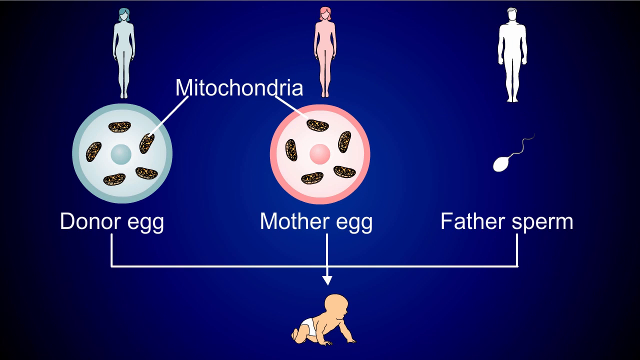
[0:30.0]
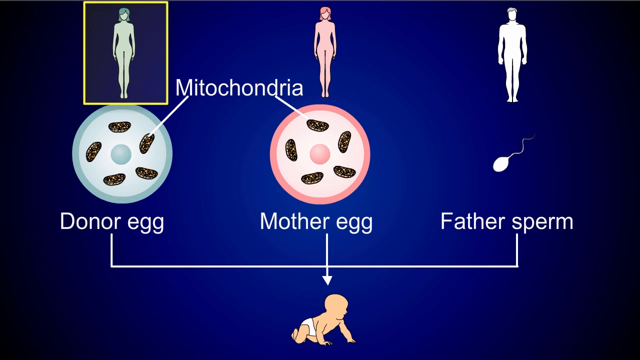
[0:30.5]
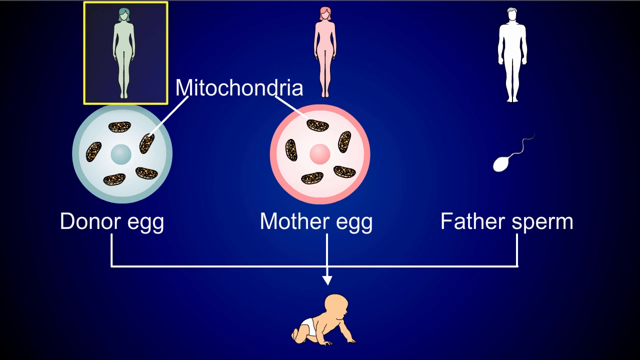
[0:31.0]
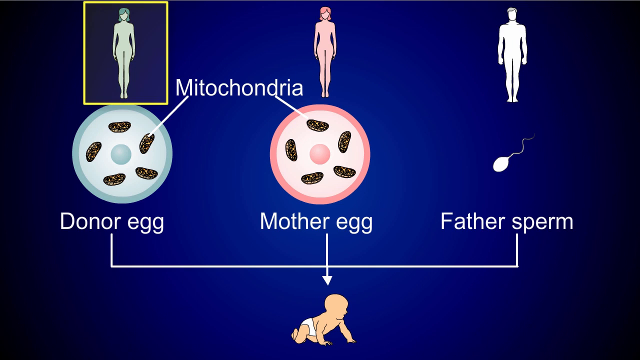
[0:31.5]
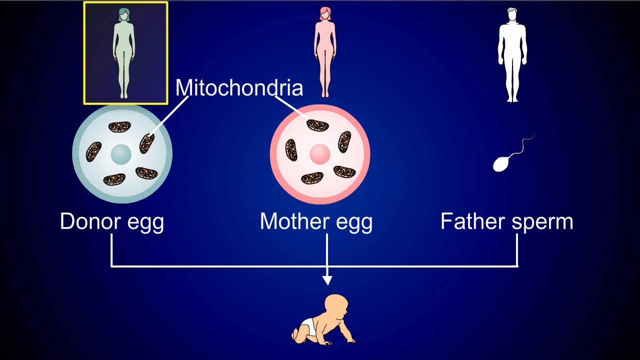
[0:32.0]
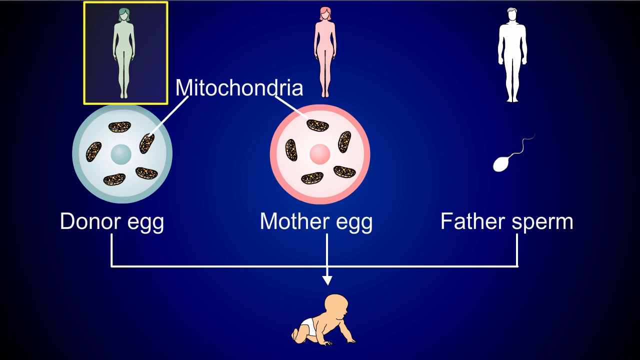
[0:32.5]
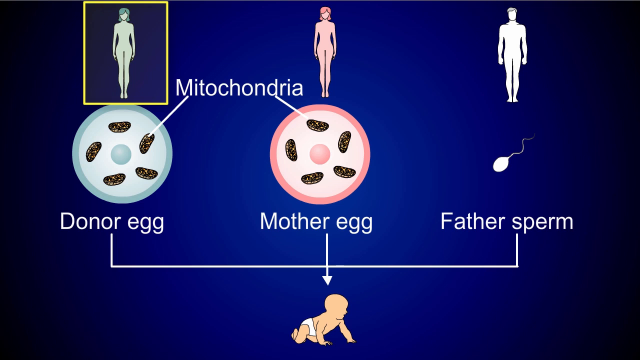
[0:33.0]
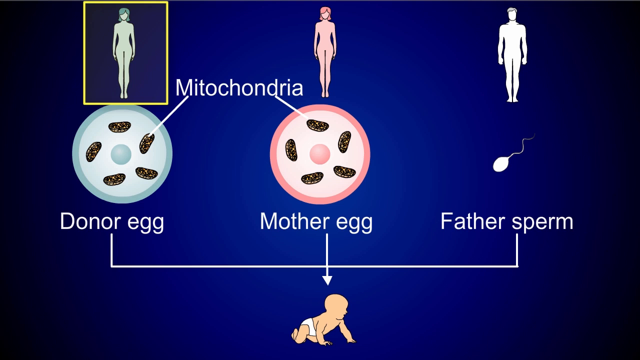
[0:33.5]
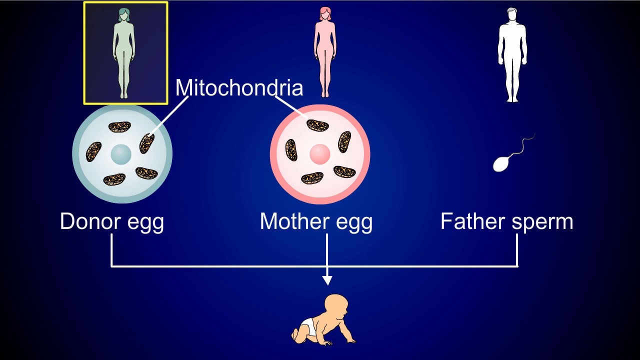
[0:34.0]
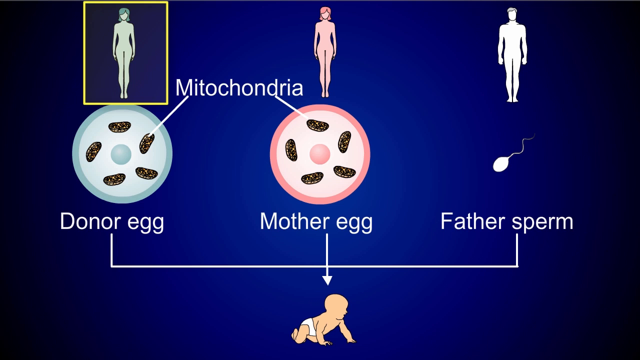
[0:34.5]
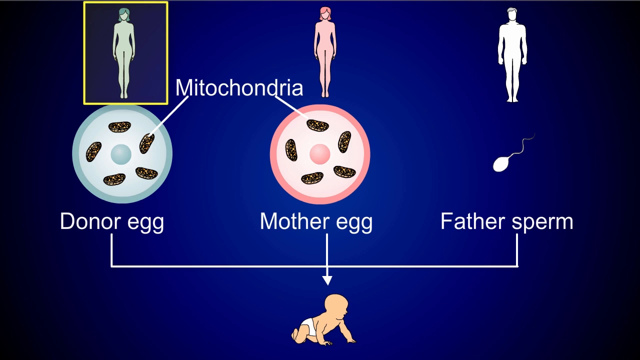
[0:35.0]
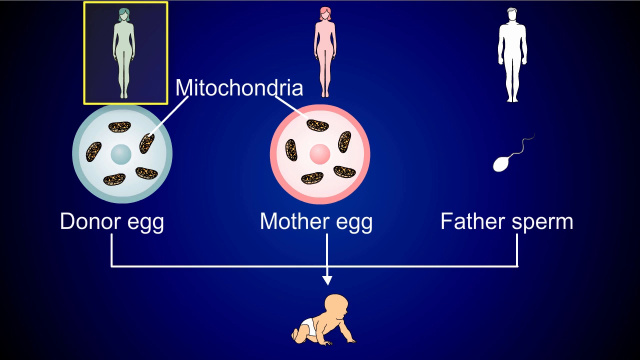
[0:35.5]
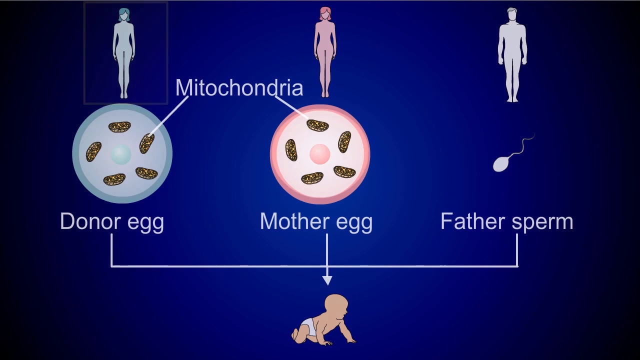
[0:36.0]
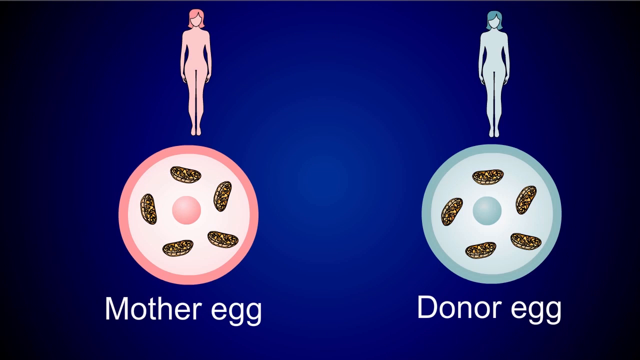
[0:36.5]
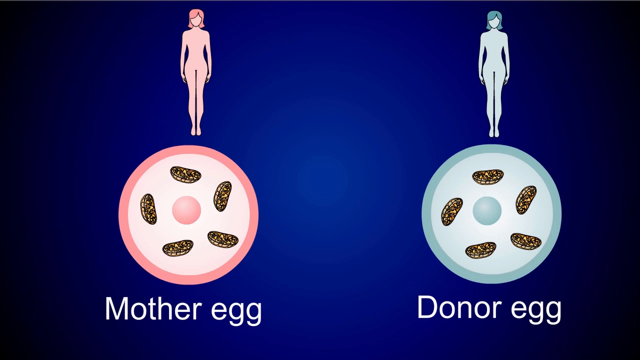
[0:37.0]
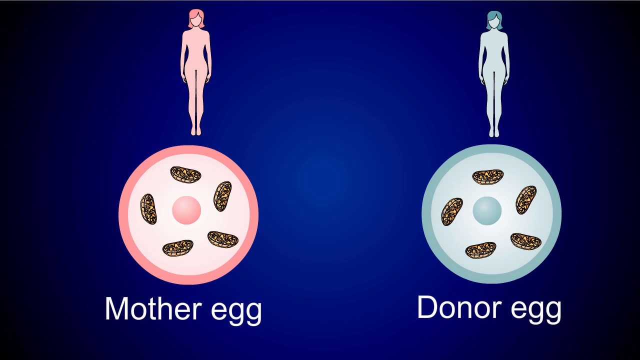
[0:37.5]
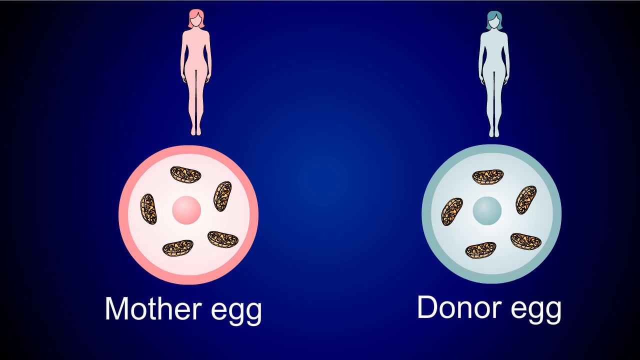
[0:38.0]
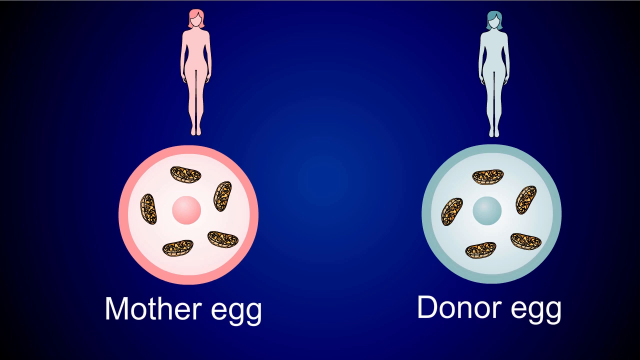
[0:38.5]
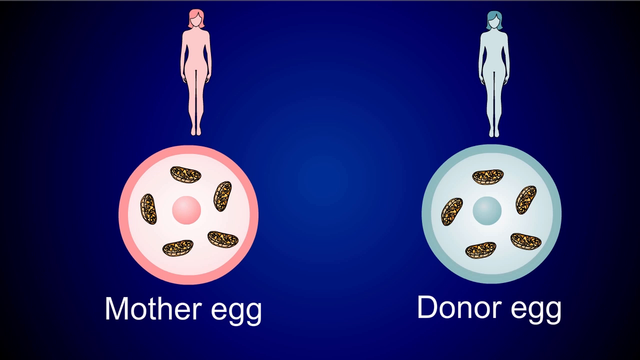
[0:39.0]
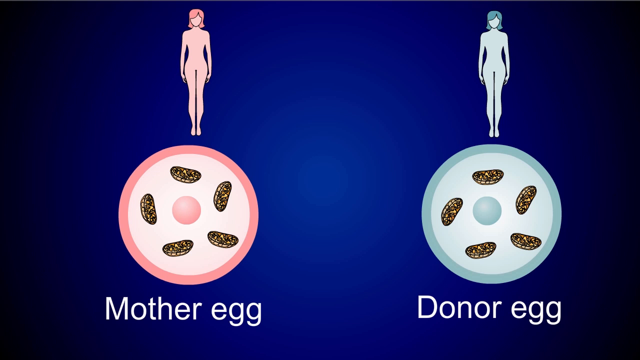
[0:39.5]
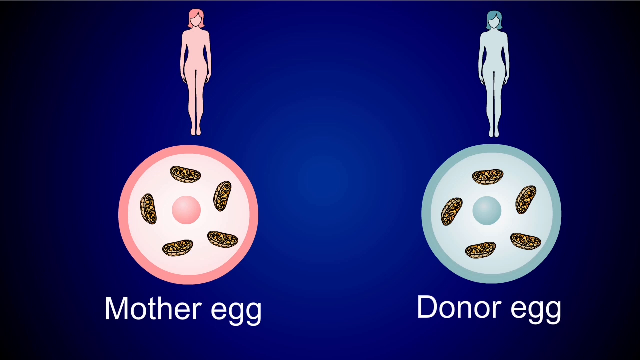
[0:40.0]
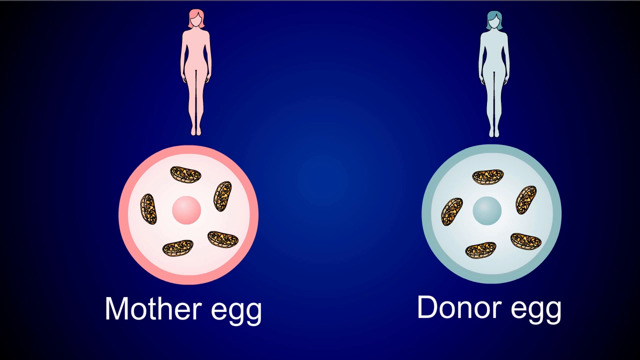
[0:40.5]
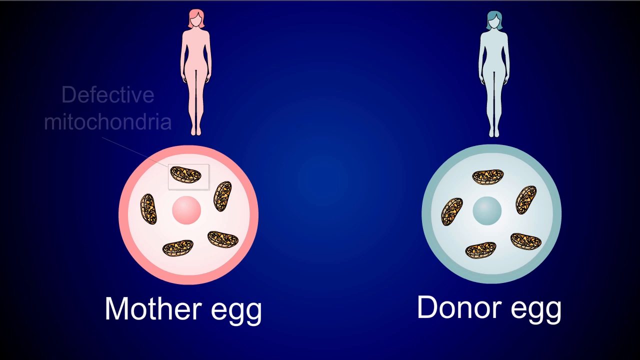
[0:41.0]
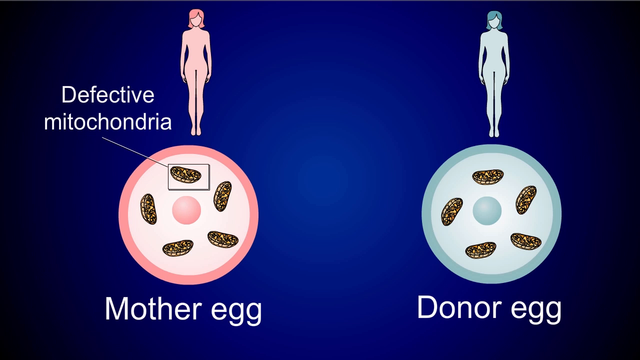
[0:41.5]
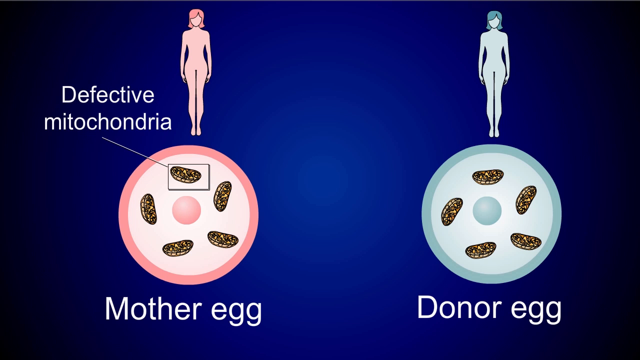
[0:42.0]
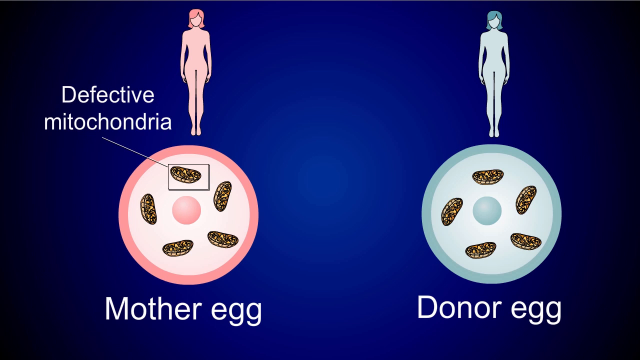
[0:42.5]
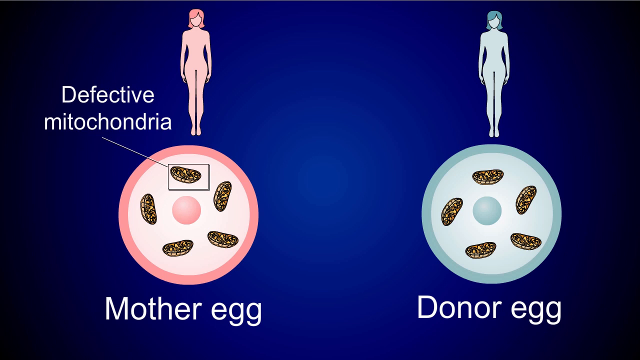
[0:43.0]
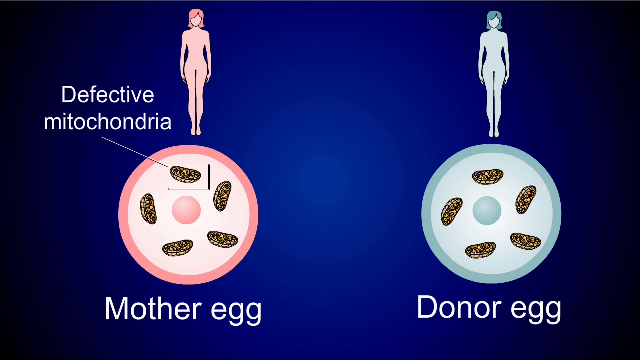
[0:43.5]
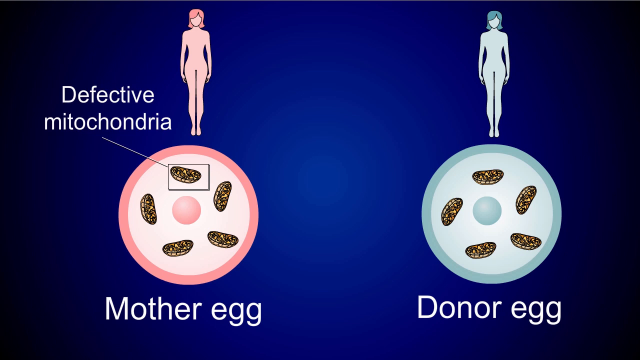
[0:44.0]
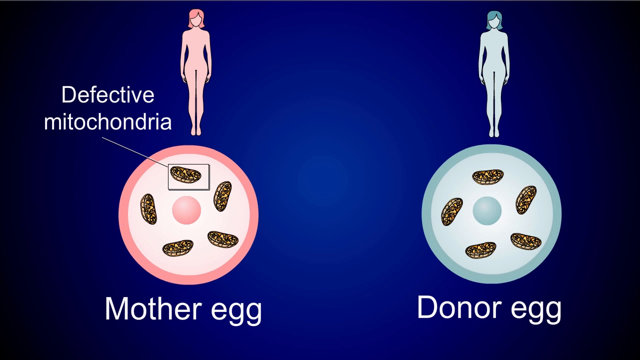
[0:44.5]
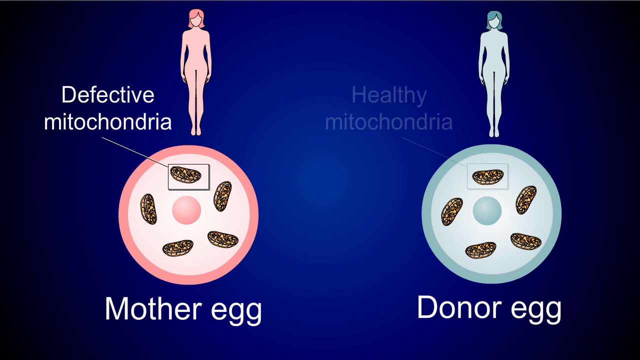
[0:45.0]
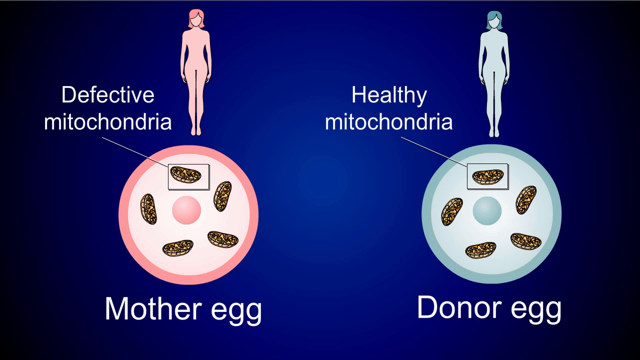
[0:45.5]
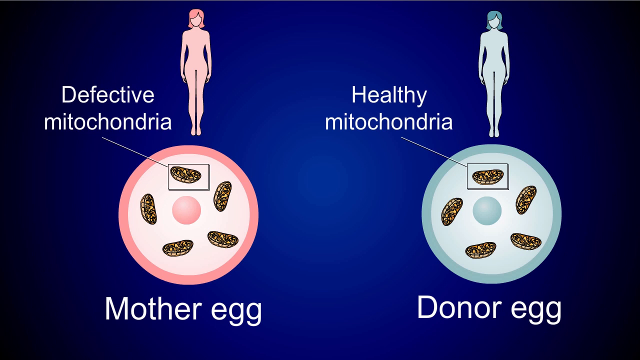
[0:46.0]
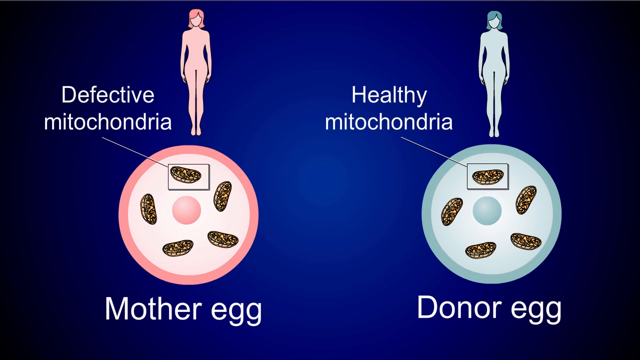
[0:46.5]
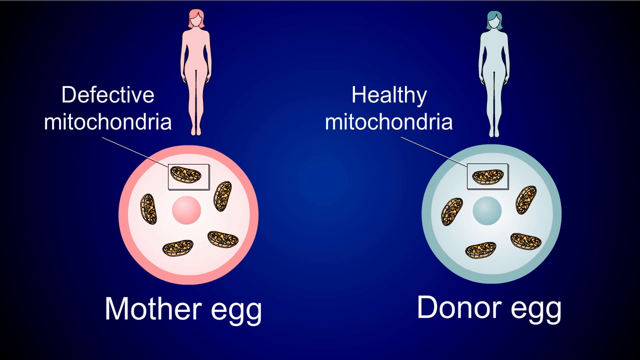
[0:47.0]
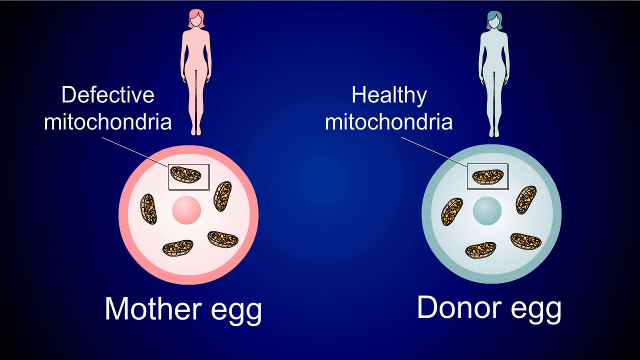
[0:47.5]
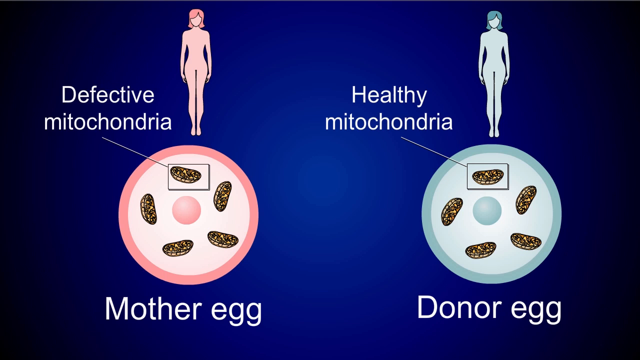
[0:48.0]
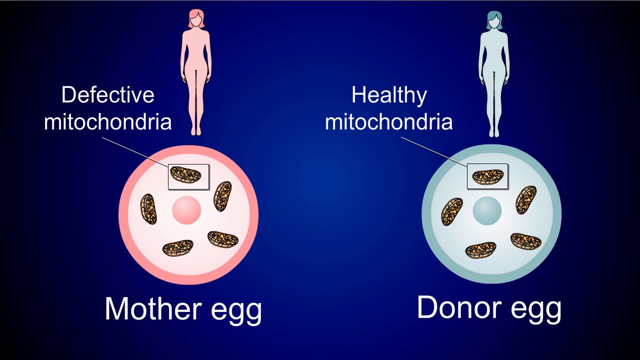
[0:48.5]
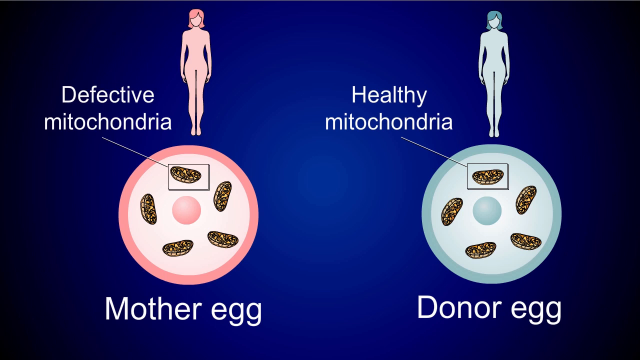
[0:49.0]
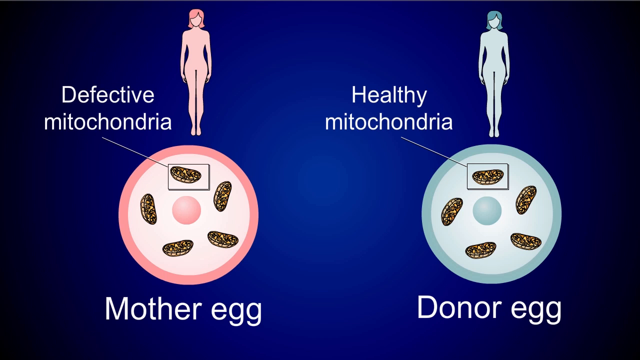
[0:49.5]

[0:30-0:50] A donor egg, a mother's egg and a father's sperm are shown being put together, with different mitochondria on the left and the right. The donor egg looks blue, the mother egg is pink, and the father's sperm looks like a little sperm with a very skinny tail. A shallow rectangle is drawn around the eggs. The video then cuts to a mother egg on the left and a donor egg on the right; text reading "defective mitochondria" points to the mother egg, and healthy mitochondria from the donor egg are indicated for combining.